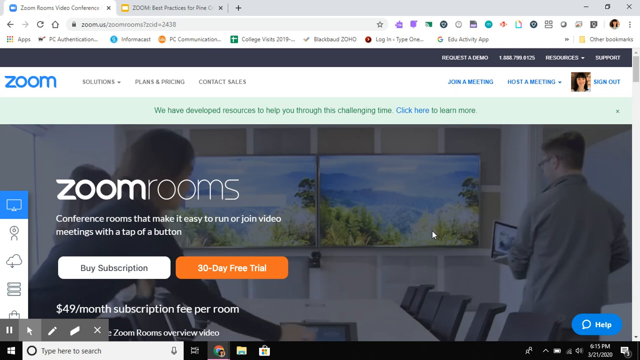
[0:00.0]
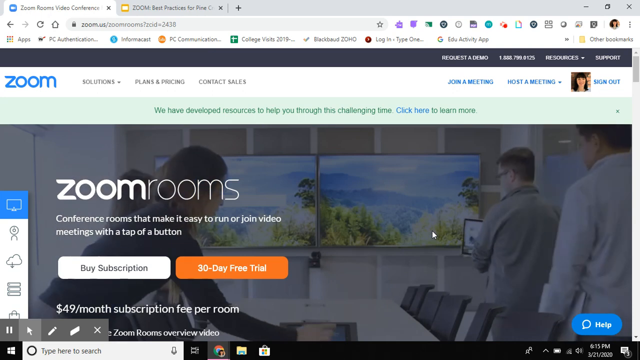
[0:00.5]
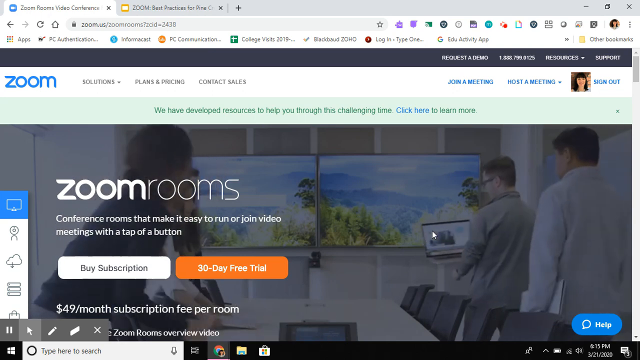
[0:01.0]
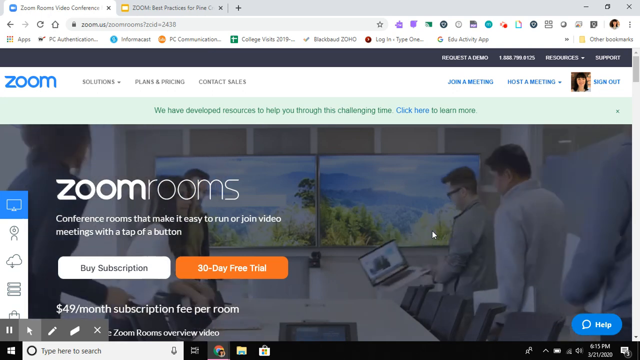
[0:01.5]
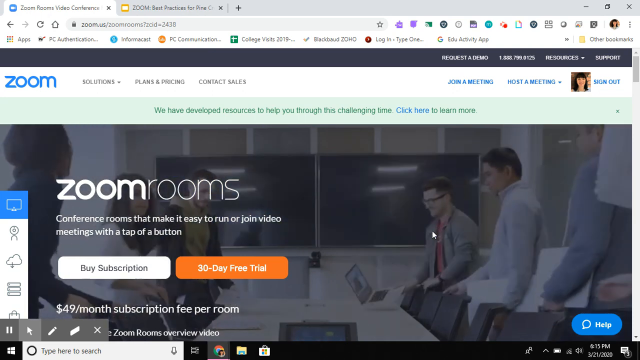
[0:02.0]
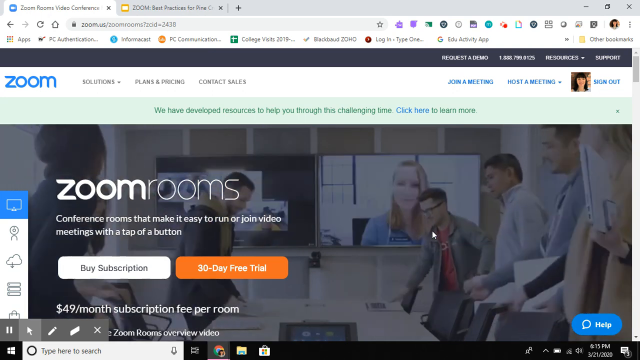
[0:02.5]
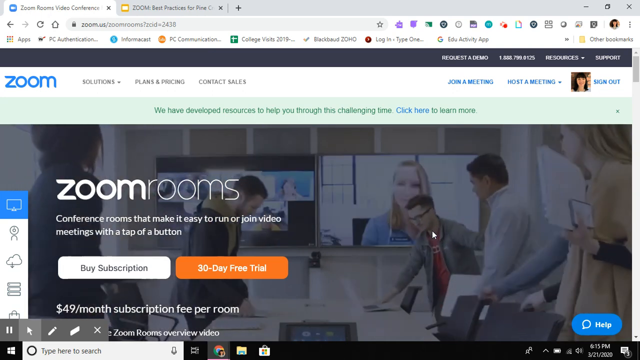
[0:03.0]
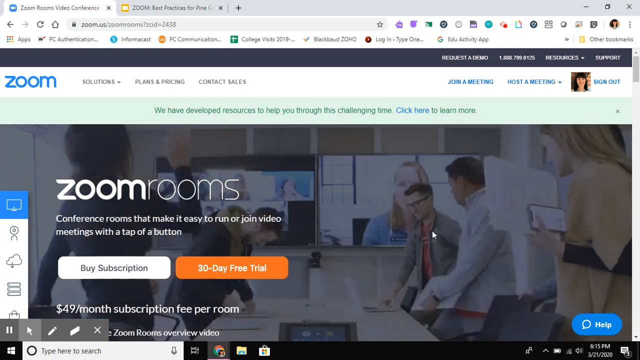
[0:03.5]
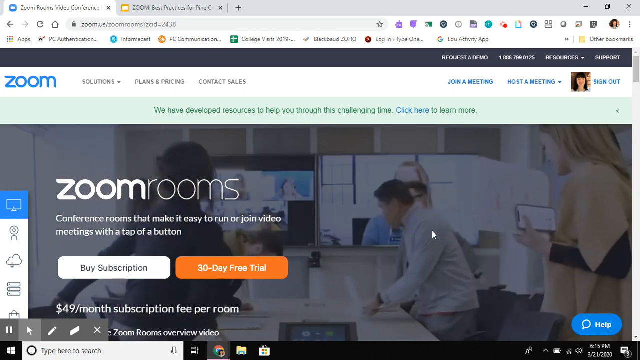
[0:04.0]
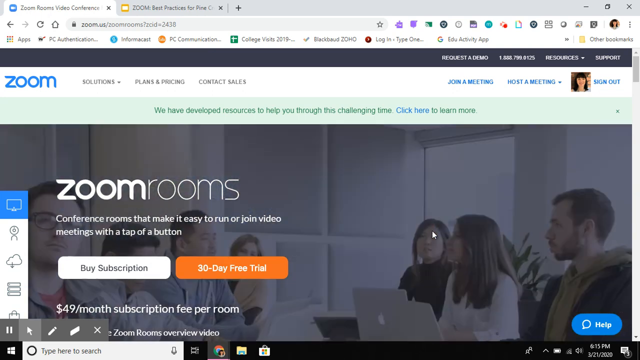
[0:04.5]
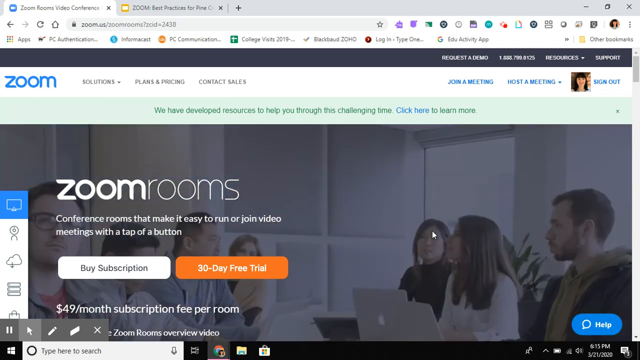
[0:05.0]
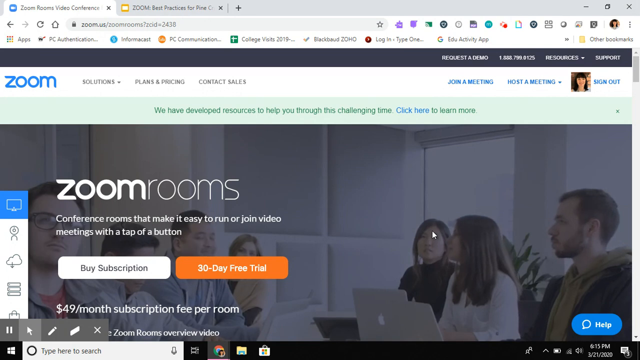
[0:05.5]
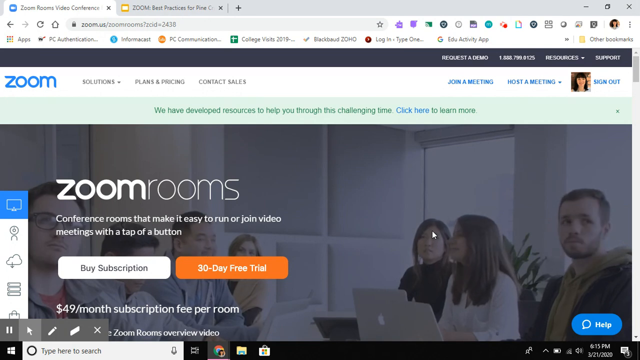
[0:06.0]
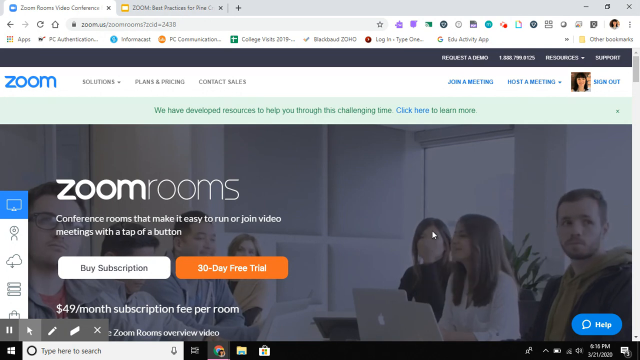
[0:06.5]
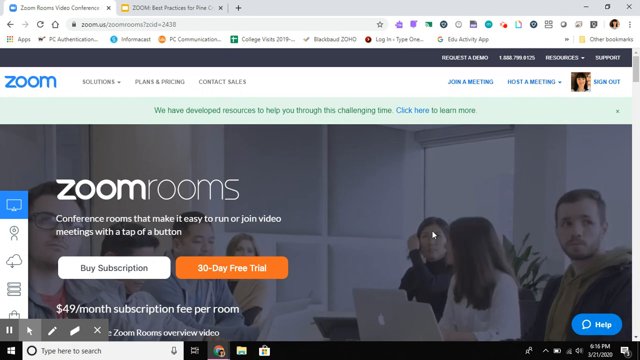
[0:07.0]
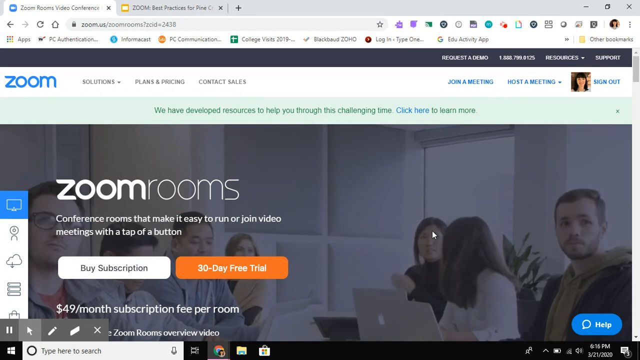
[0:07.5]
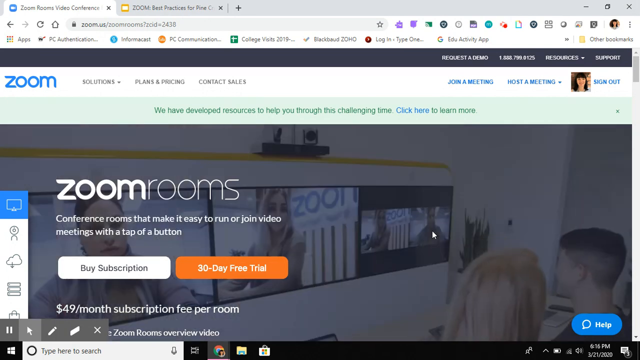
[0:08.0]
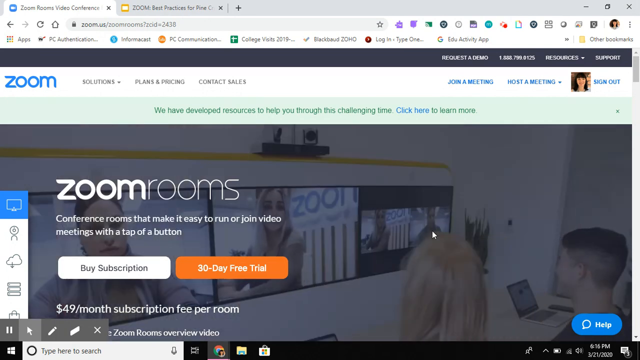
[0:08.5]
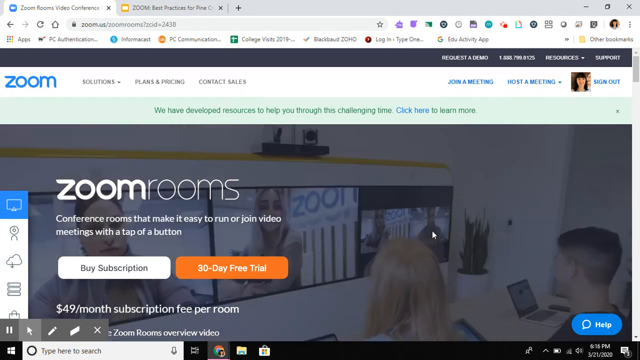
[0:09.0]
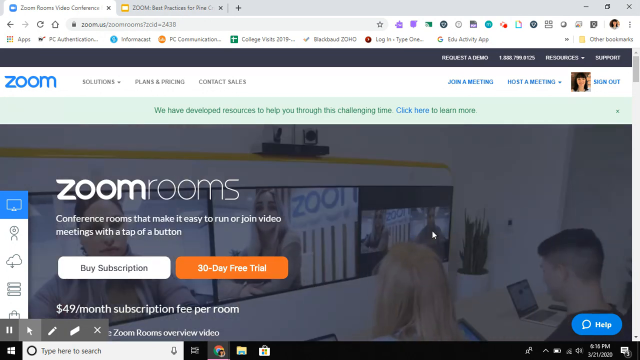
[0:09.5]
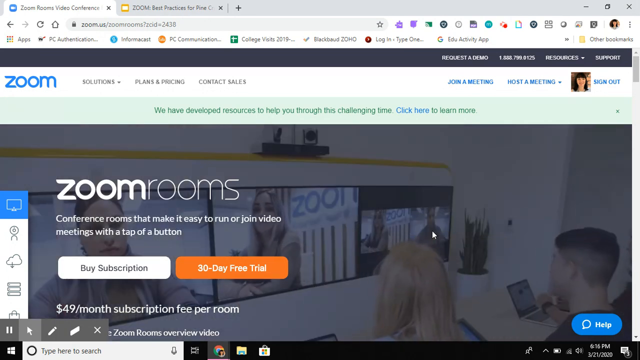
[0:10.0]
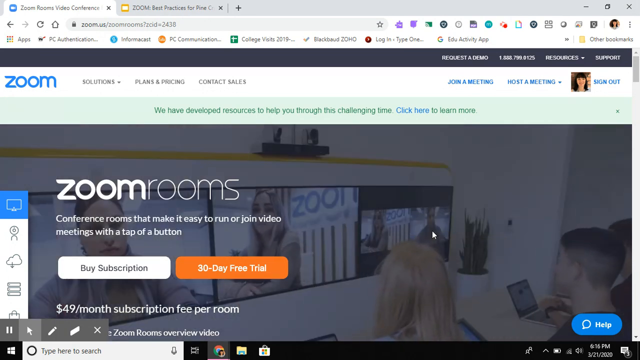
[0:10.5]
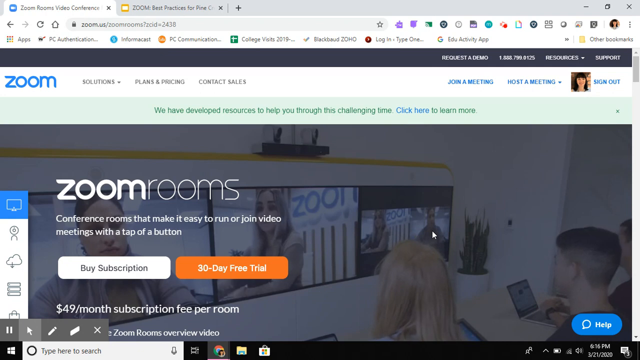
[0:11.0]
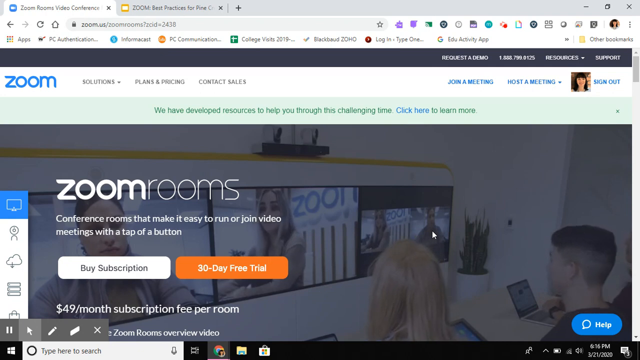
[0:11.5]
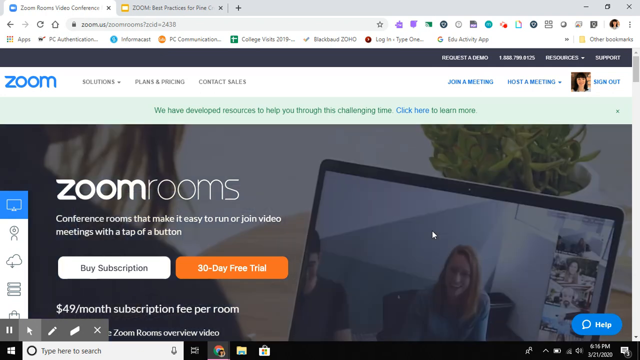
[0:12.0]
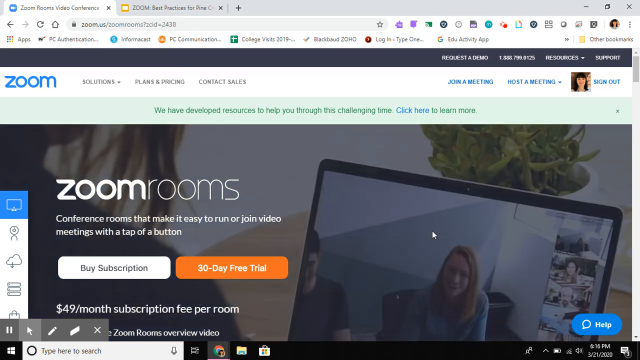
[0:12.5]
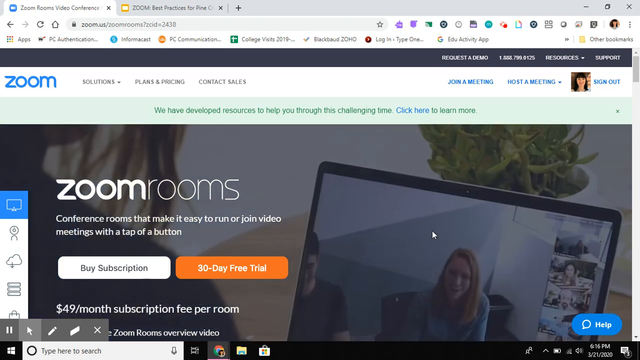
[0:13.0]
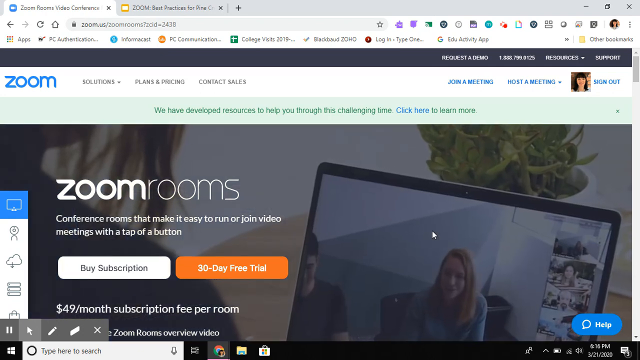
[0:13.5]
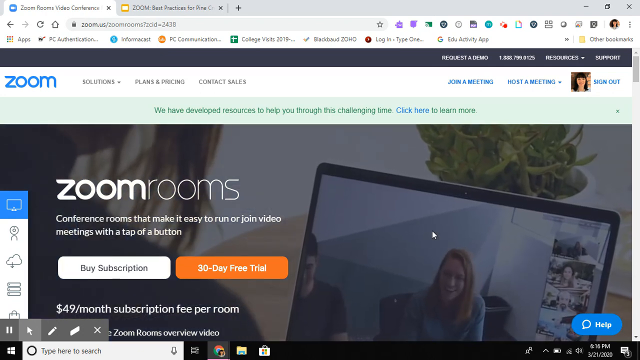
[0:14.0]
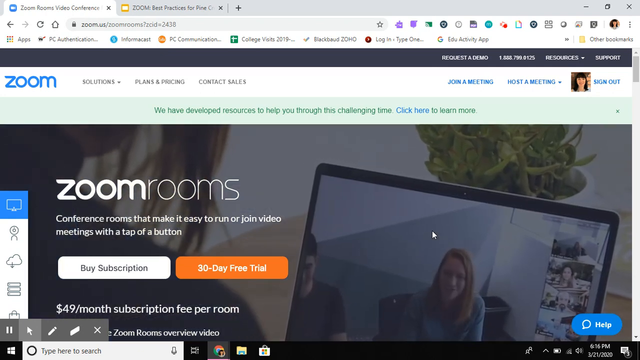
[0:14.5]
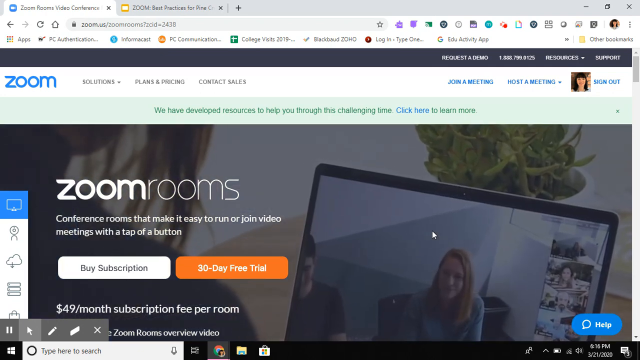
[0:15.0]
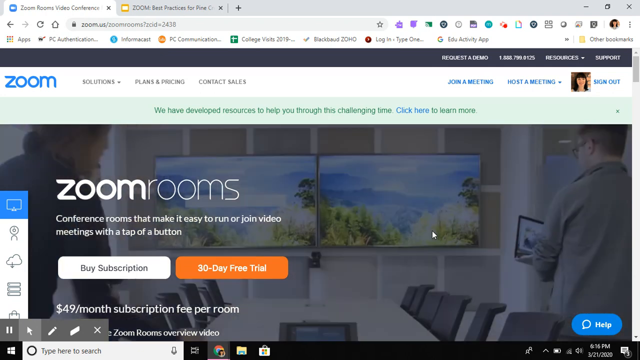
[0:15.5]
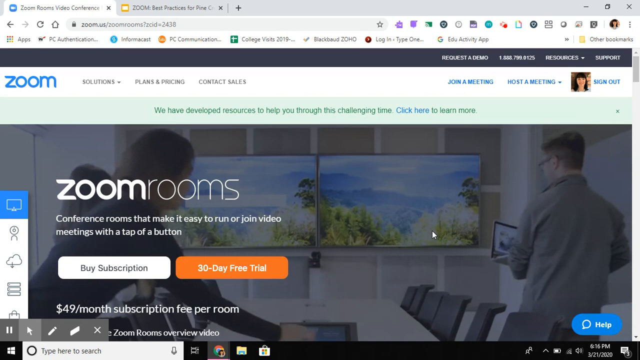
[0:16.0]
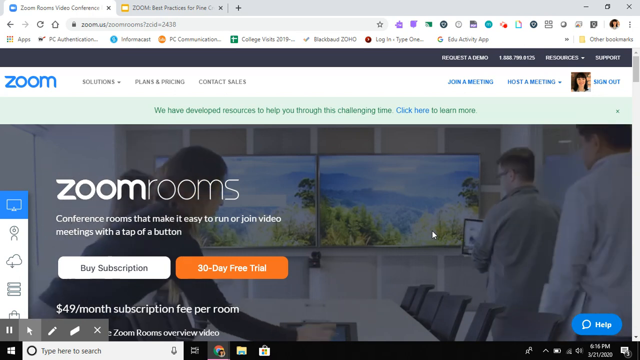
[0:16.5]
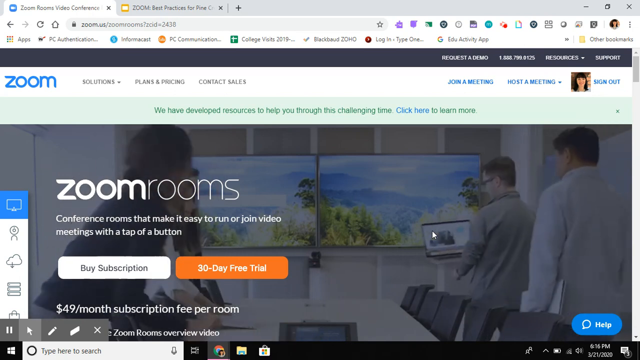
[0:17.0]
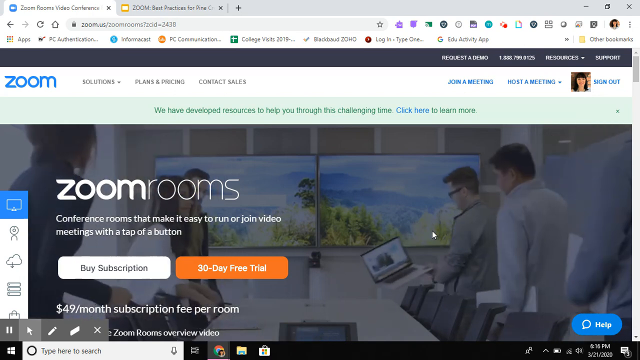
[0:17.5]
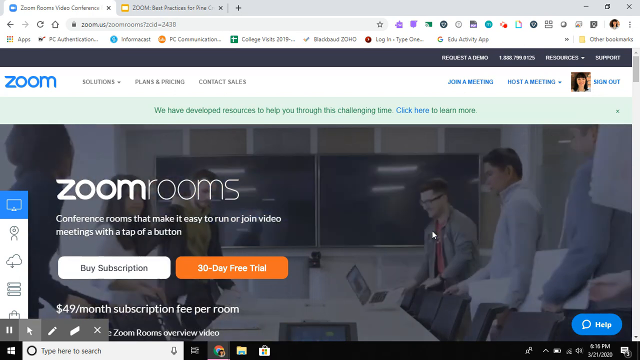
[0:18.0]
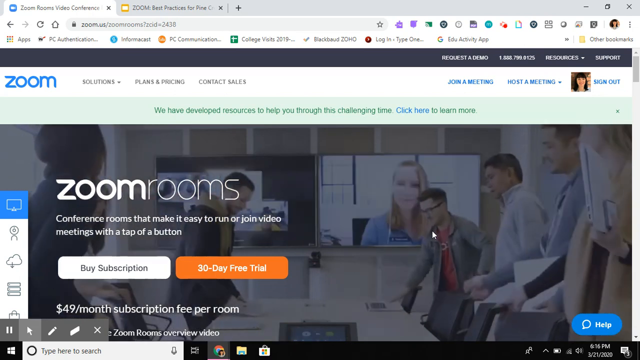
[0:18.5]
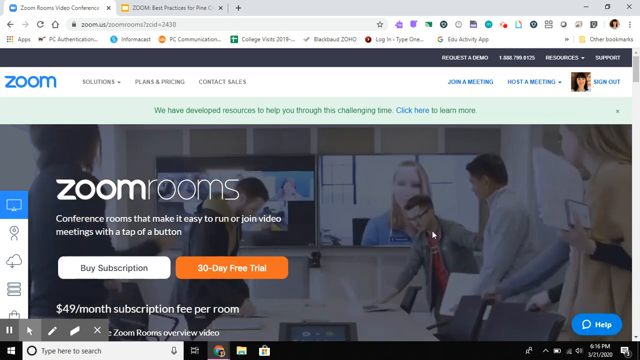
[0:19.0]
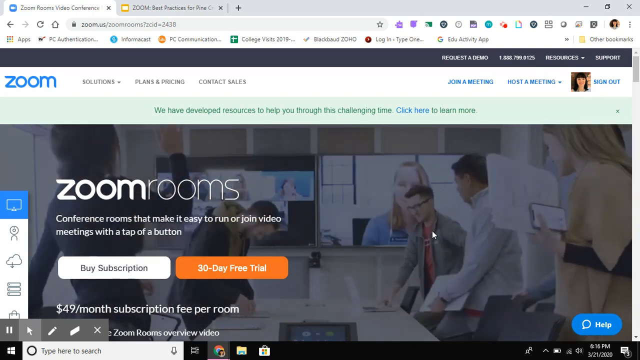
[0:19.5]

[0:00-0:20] The scene is the Chrome web browser with two tabs open. The first tab is zoom.us and shows the Zoom Rooms video conference page; the second tab is also from Zoom and says "best practices from" before continuing. The first tab, the Zoom home page, is displayed. "Zoom" is written in blue on the top left. The page has drop-down menus and buttons: on the left side are "solution", "plans and pricing" and "contact sales"; on the right side are "request a demo", a telephone number, "resources" and "support". Underneath those are "join a meeting", "host a meeting" and "sign out", since the user has logged in. The page says "we have developed resources to help you through this challenging time. Click here to learn more." The main area says "Zoom rooms conference rooms that makes it easy to run or join a video meeting with a tap of a button", with "buy subscription" and "daily free trial" options; the subscription is $49 per month per room. A video advert on the home page shows different people inside a meeting room, most of them carrying laptops, in a live video session. Three screens mounted on the wall display people in different places, as they host a Zoom meeting and see each other via the webcams of their devices.